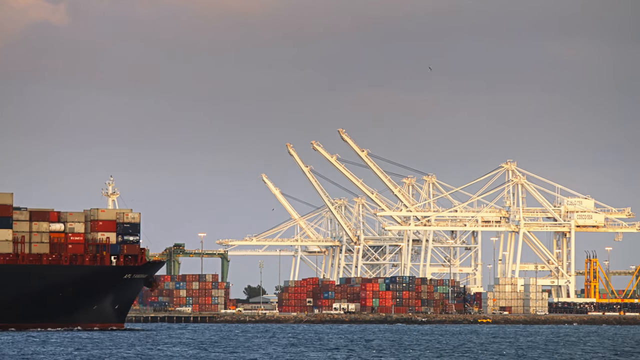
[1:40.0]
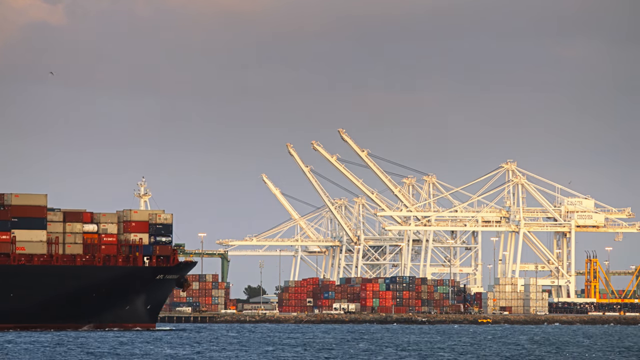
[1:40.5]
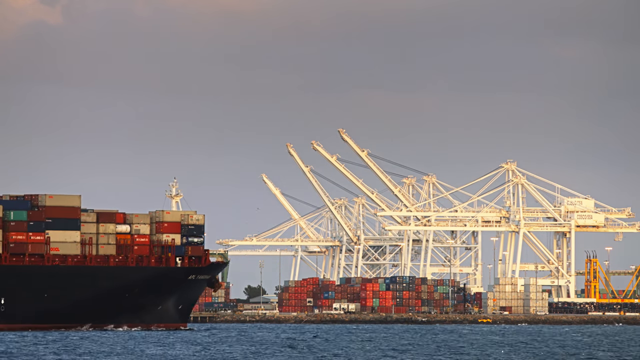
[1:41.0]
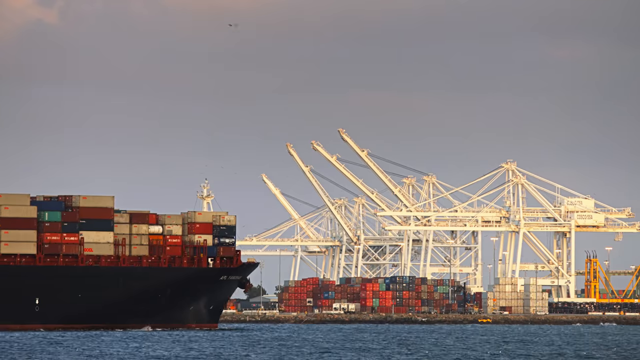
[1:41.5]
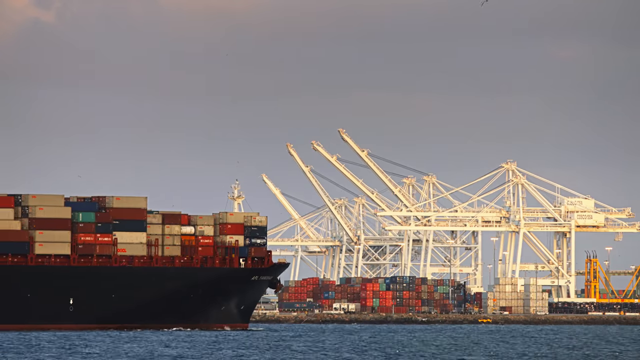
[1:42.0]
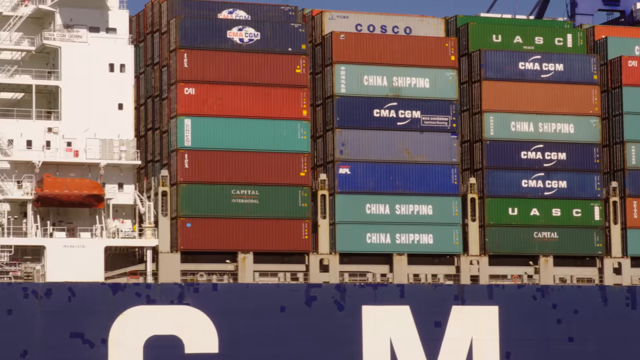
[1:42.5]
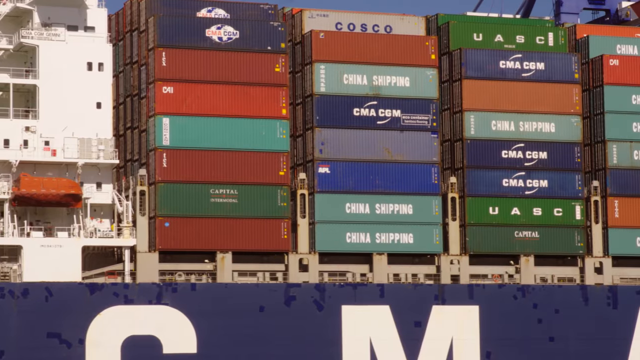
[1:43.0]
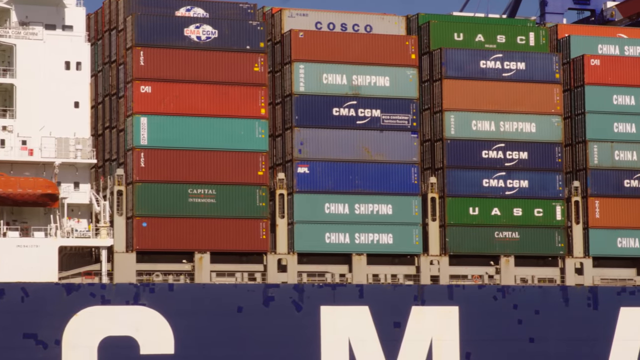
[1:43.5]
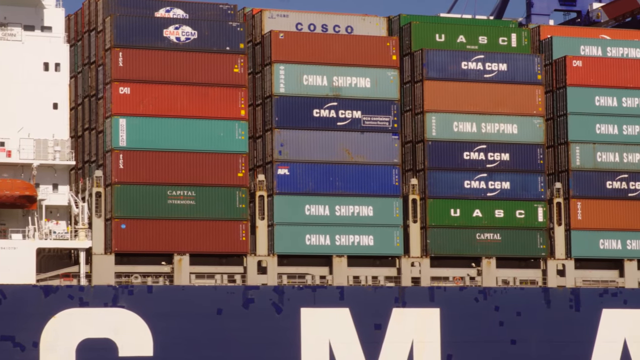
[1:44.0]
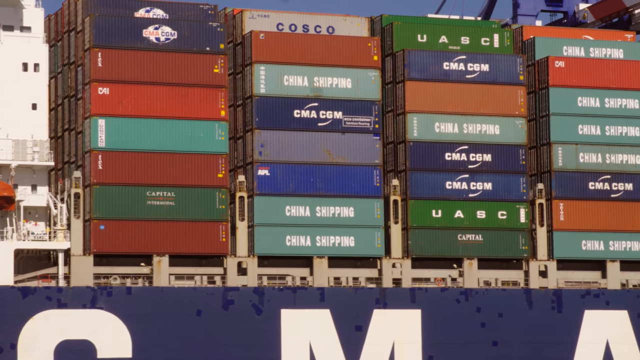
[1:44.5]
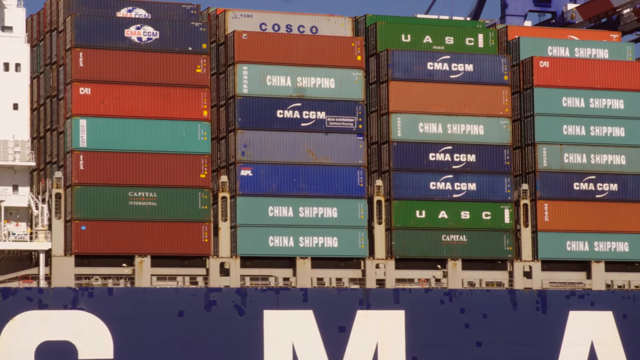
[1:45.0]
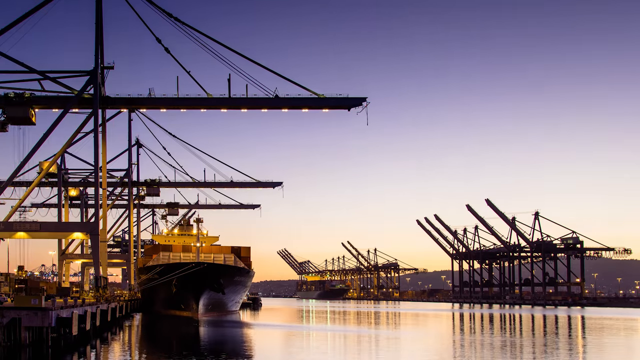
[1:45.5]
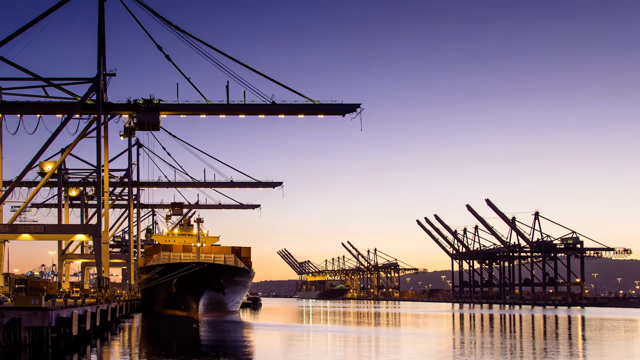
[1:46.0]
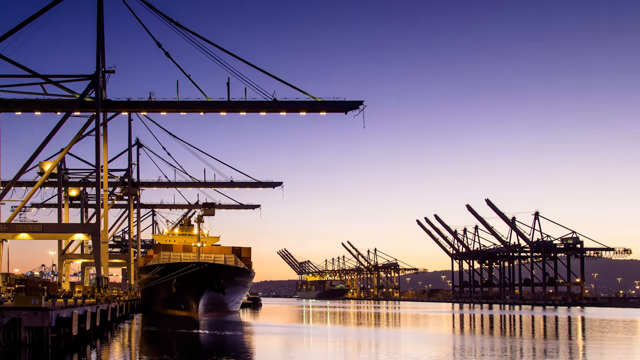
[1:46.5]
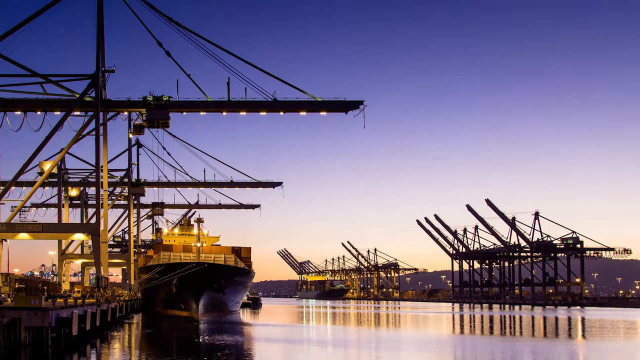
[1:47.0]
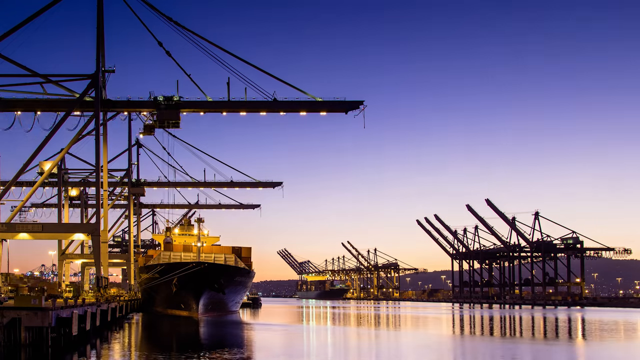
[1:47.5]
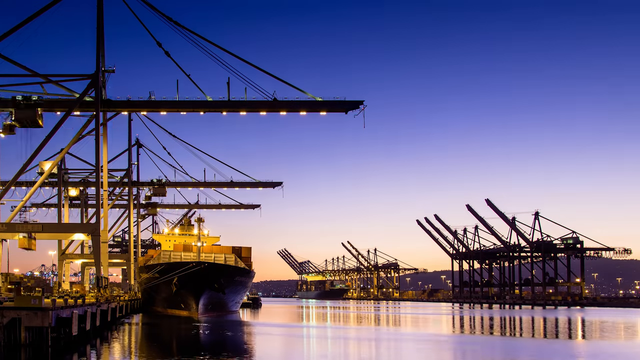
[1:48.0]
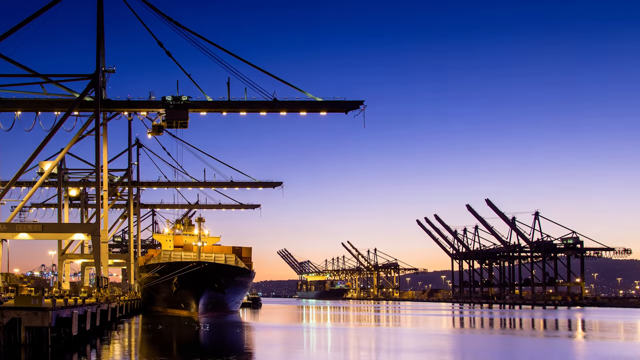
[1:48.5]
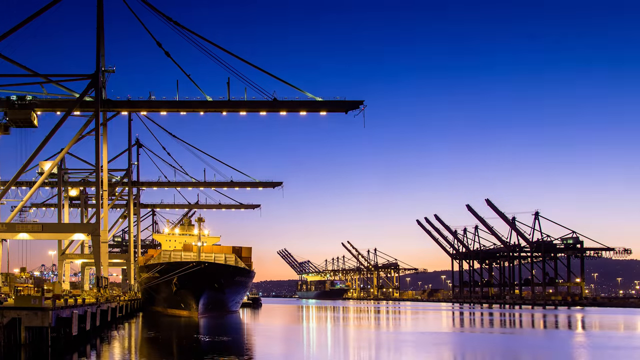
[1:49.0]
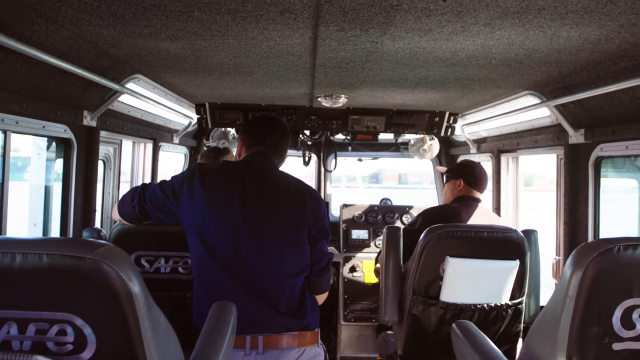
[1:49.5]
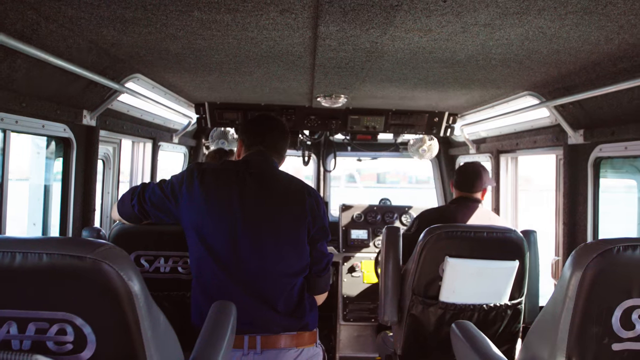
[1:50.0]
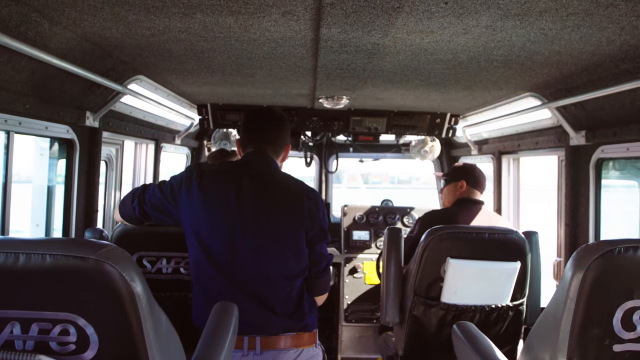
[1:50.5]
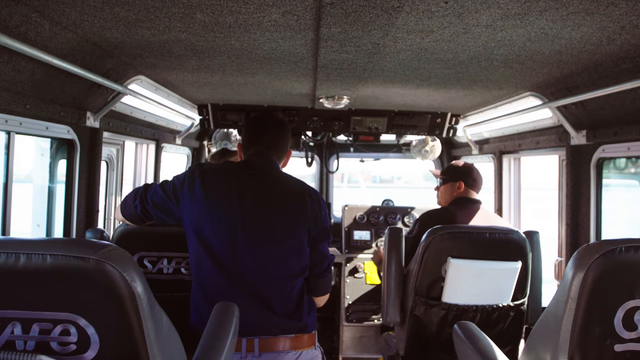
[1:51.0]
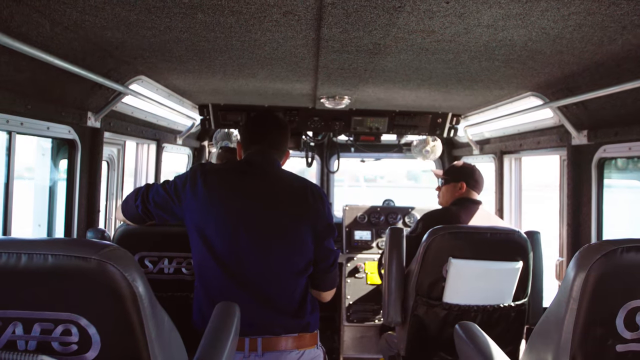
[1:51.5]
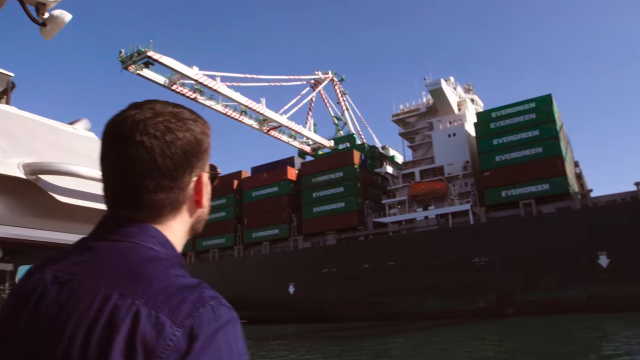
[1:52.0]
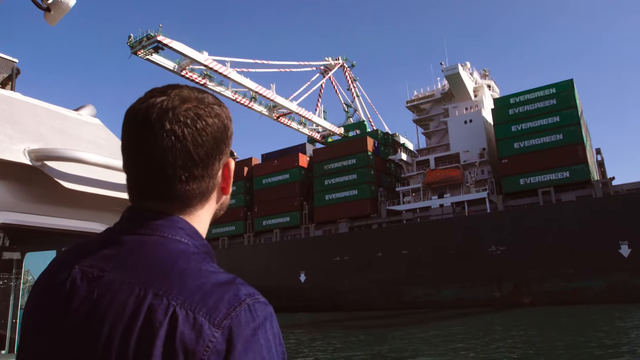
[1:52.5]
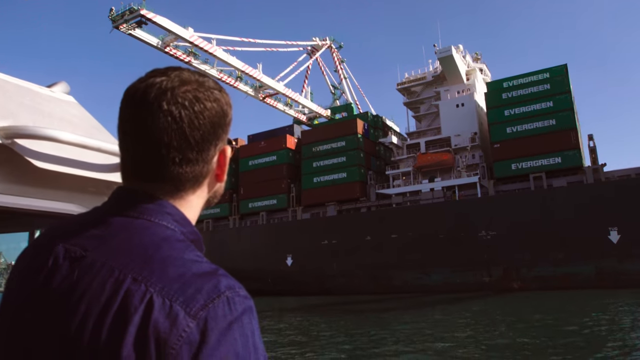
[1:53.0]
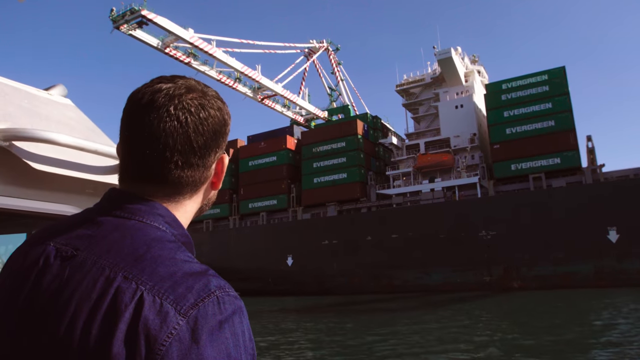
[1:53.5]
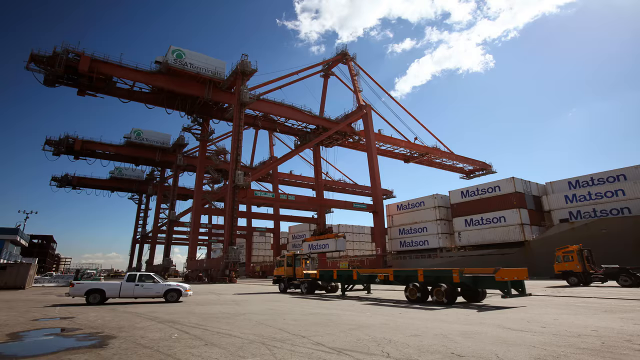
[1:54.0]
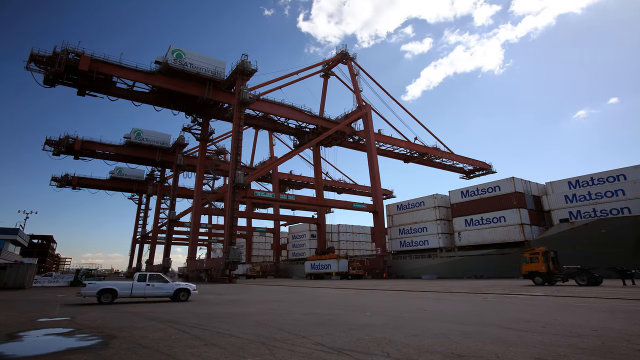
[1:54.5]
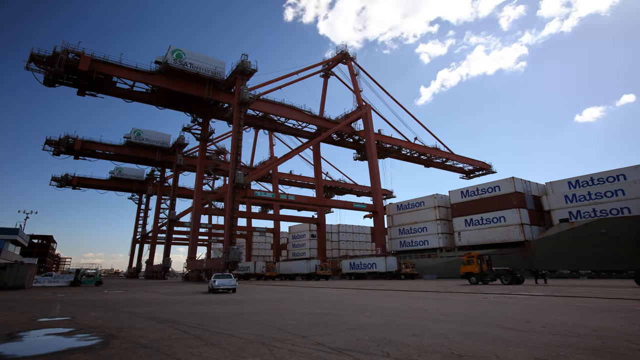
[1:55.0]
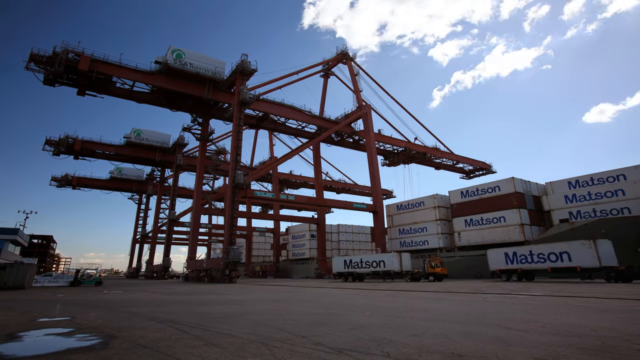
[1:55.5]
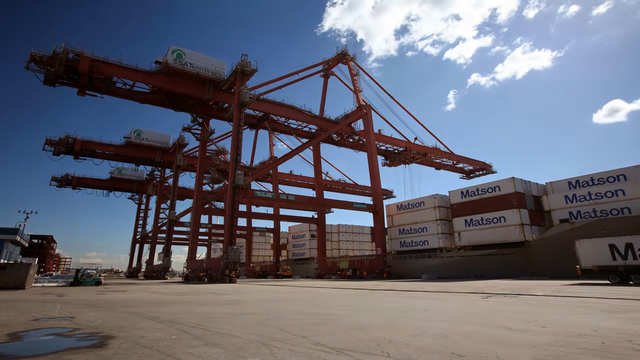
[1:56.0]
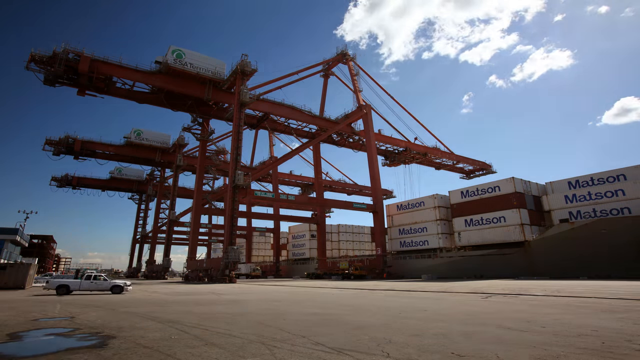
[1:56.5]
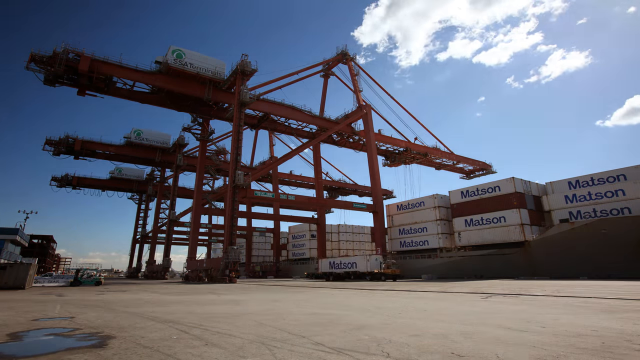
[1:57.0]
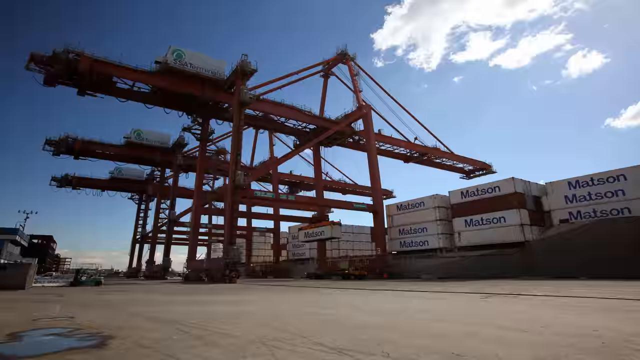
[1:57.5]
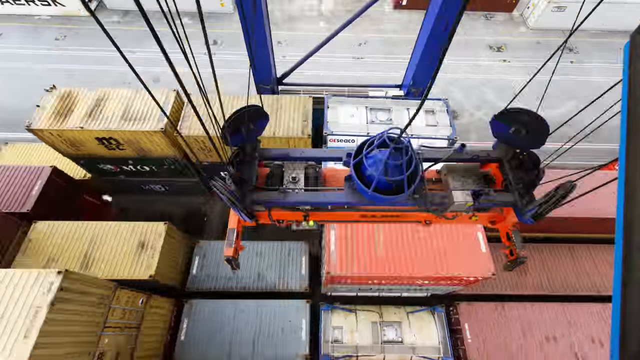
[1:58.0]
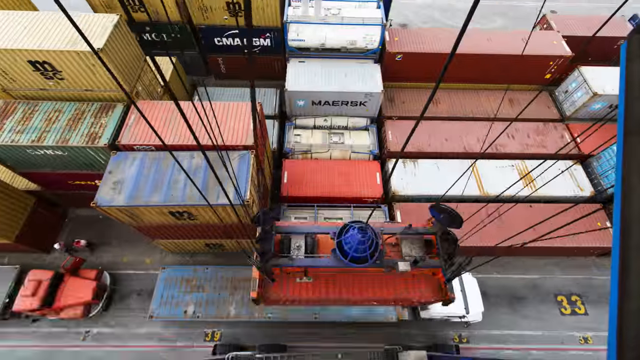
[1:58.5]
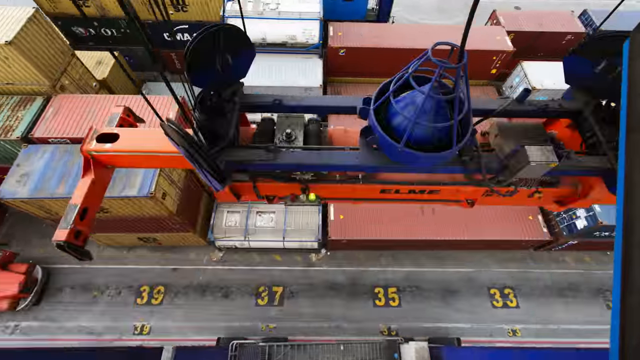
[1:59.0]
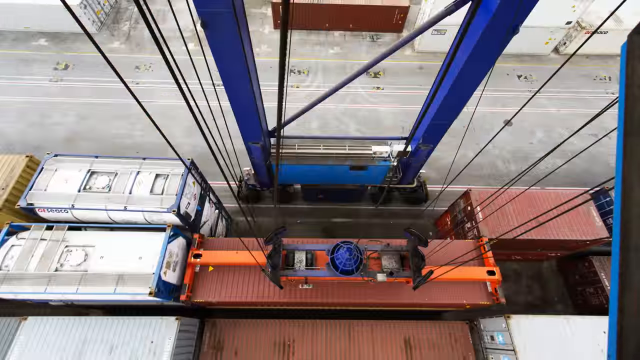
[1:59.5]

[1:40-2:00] The container ship moves quite slowly across the water, covered with containers, with a bunch of white trains in the background. A short zoomed-in view shows the containers in all different colors, stacked very high, with the names of different things in white letters on their sides. A container ship sits at port, apparently at sunset, as the sky is getting dark and the sun is low, and many lights are on inside the cranes, illuminating the area. What looks like the view from inside one of the cranes shows two men at a console; the man on the right appears to be using a steering wheel, and a third man stands behind the two chairs, observing them.